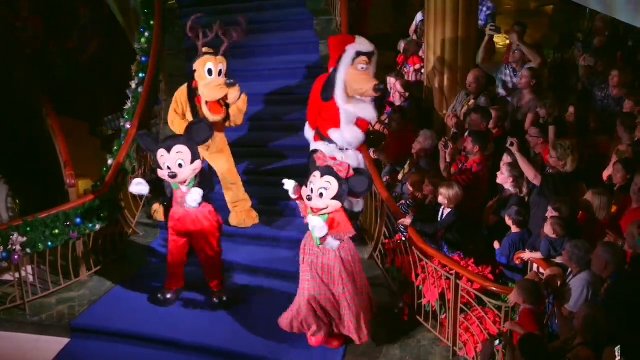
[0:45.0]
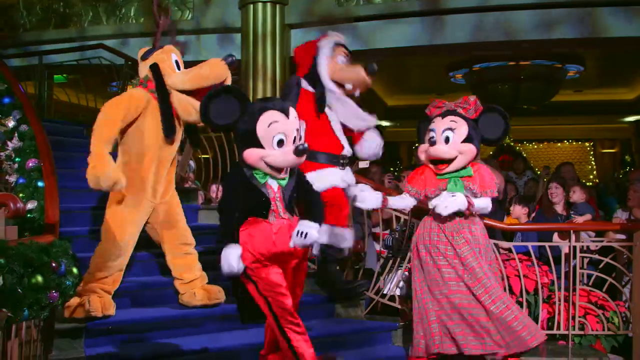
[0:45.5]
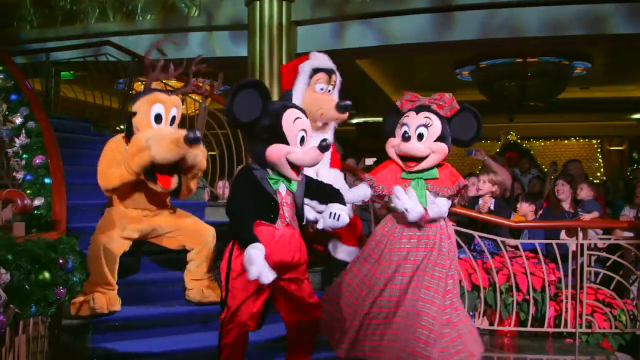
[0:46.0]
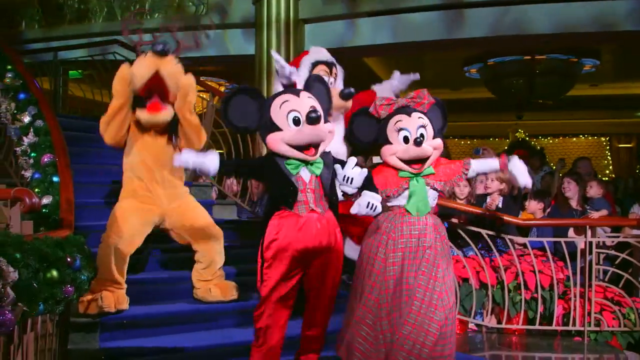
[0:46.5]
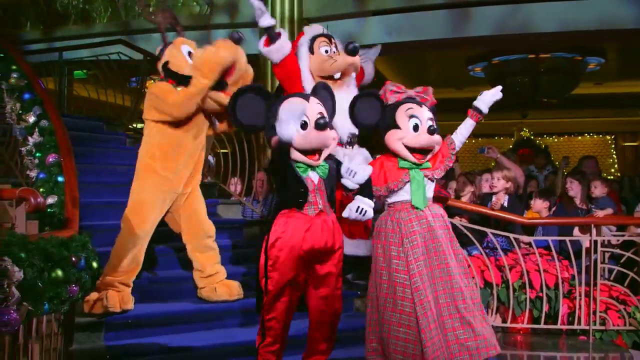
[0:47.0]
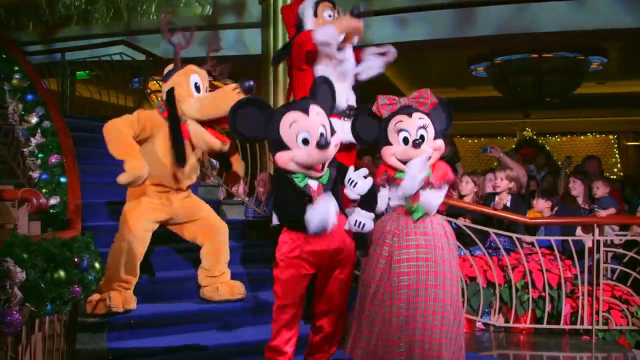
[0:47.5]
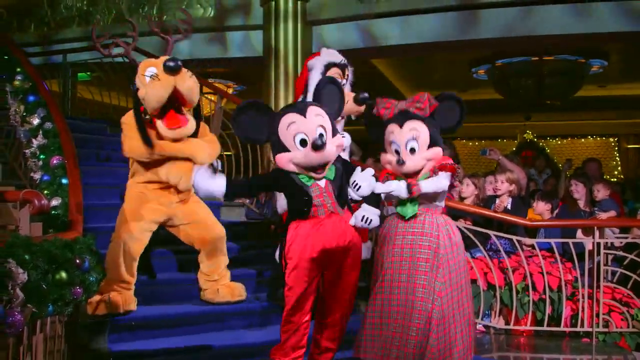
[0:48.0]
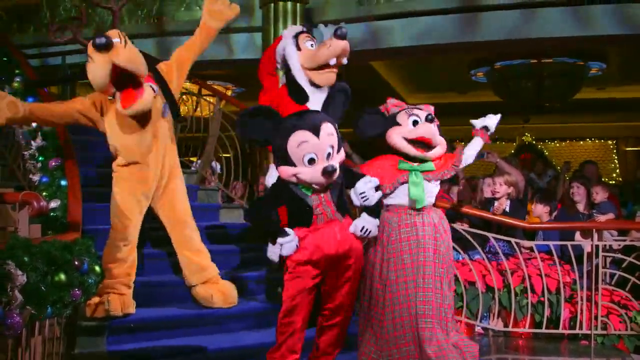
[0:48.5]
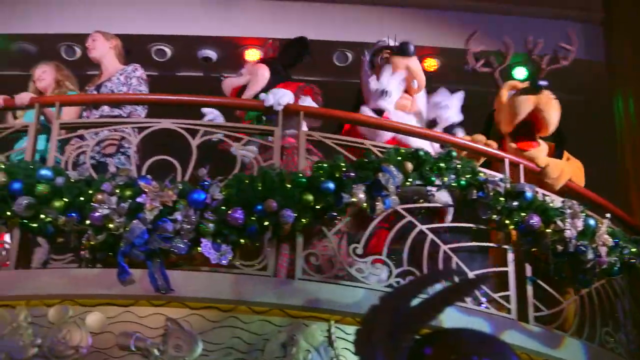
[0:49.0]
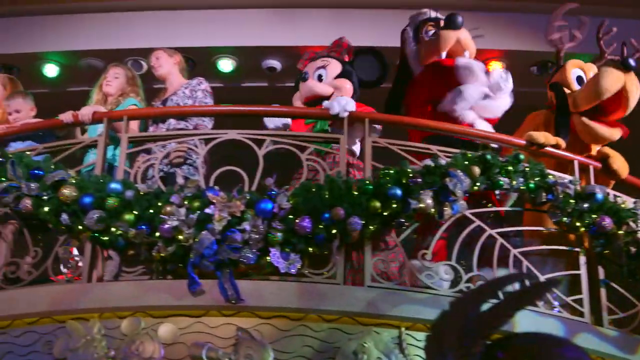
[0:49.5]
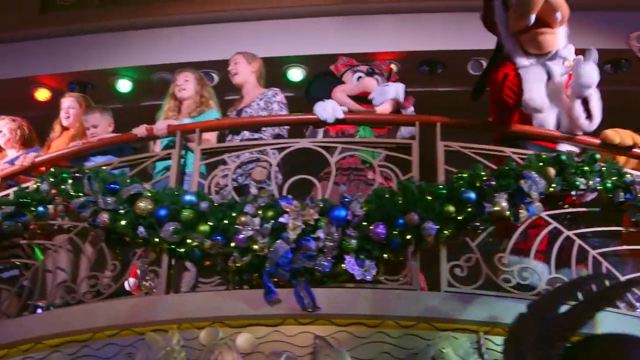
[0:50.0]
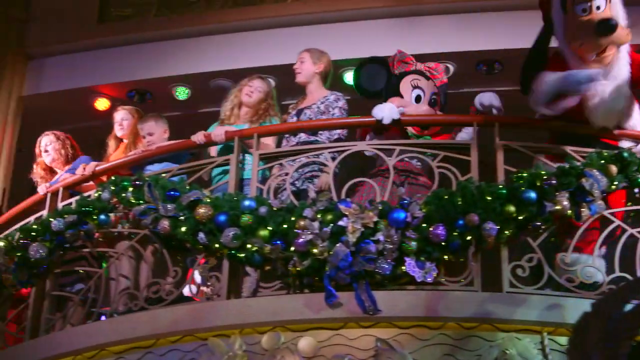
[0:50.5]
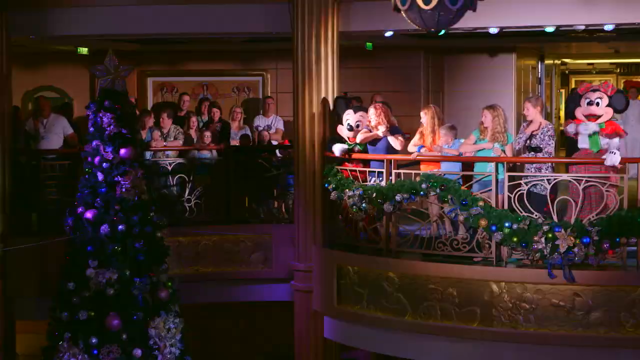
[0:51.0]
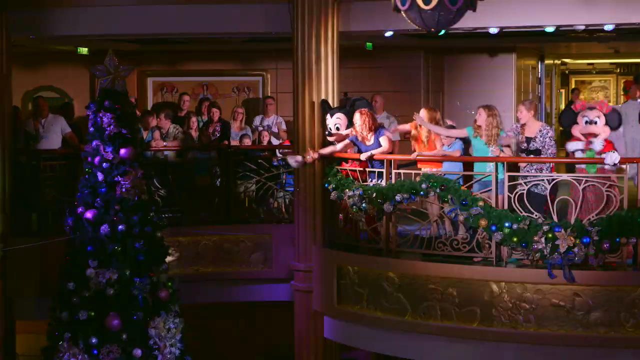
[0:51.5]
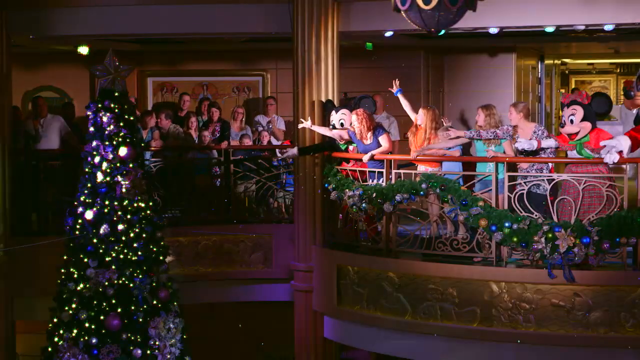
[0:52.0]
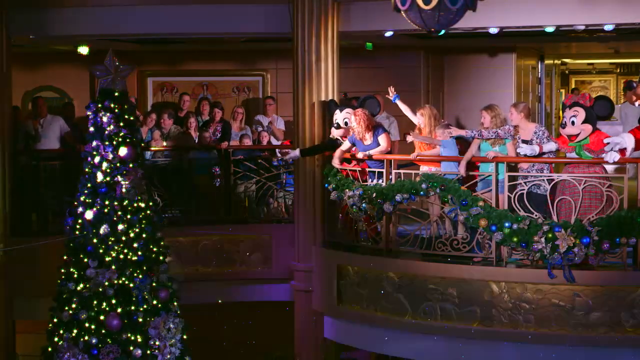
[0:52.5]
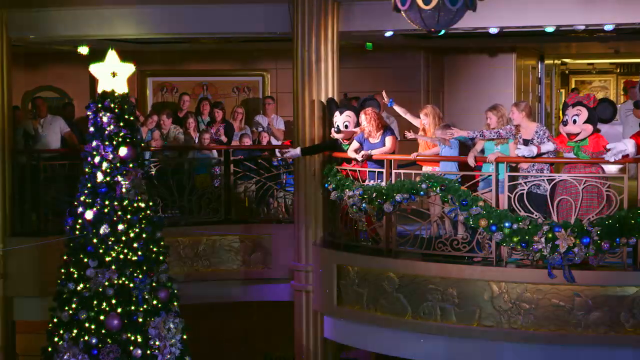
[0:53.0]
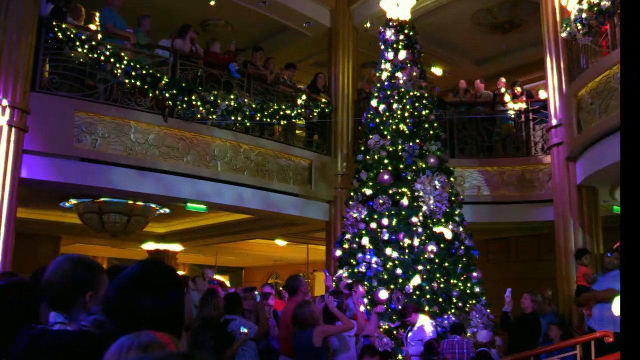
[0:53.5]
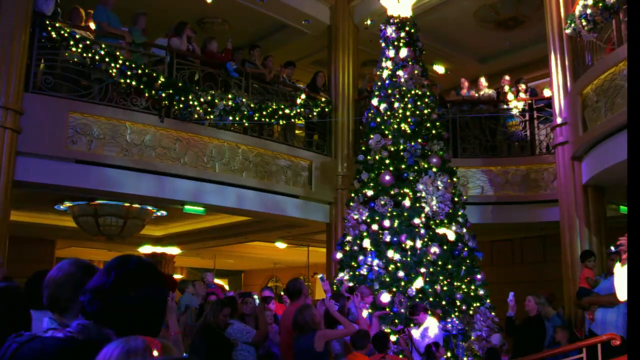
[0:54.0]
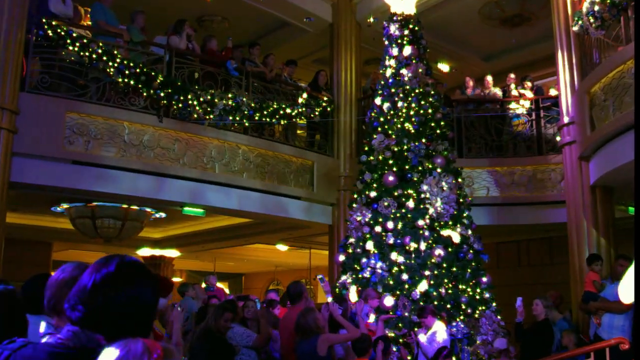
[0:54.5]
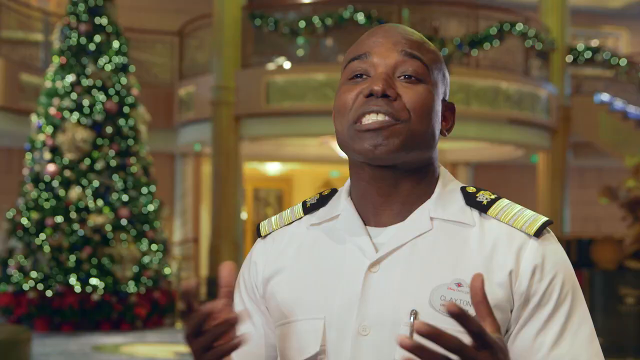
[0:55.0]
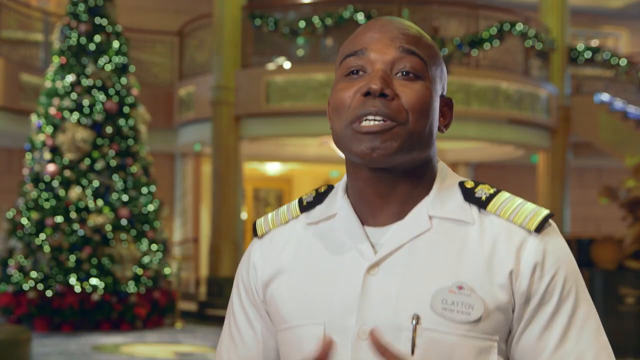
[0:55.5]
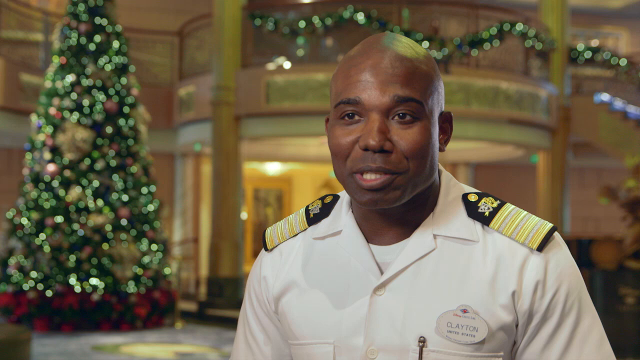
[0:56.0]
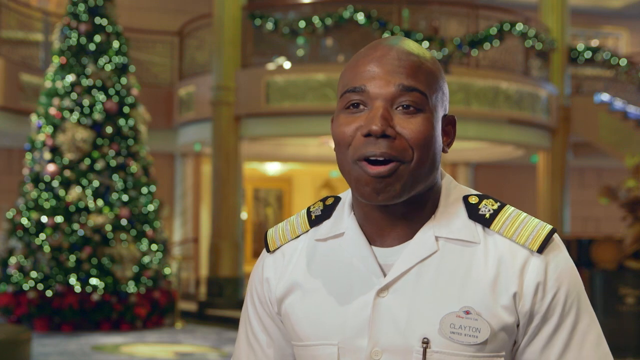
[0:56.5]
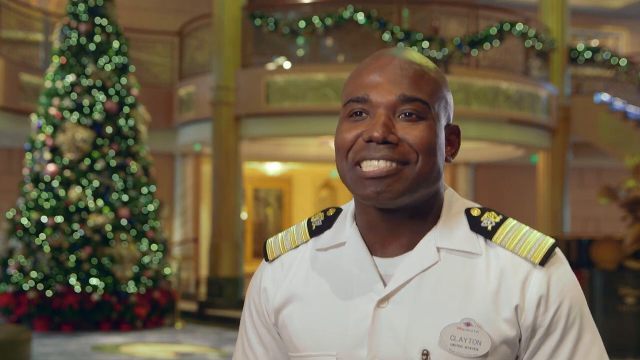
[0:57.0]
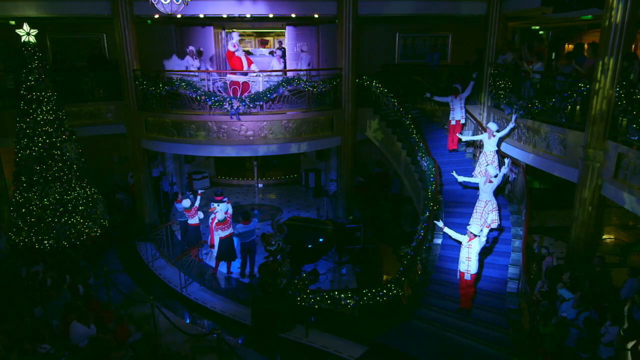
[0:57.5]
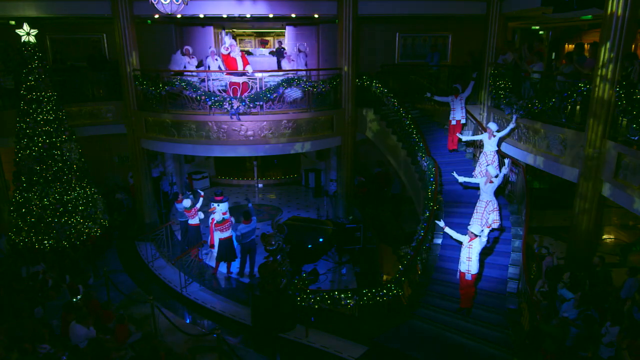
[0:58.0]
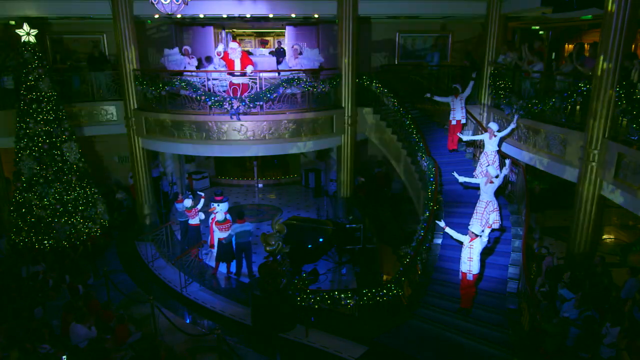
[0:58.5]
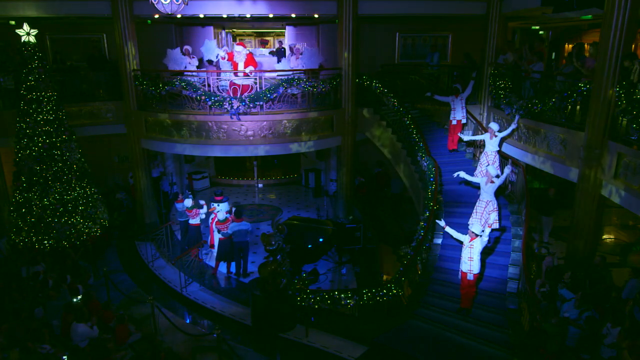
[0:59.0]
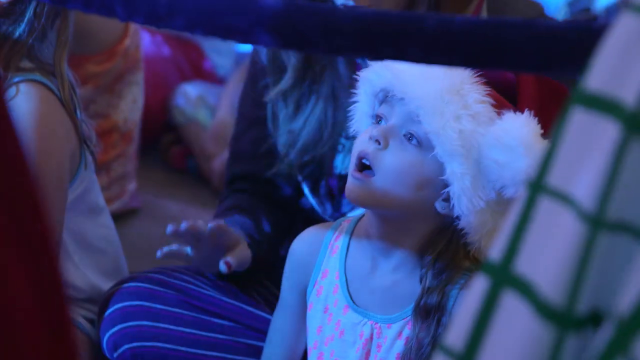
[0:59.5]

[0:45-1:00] Mickey and Minnie Mouse, Pluto and Goofy dance on a large blue staircase as children and adults look on, with lots of garland and poinsettias around. From the ground floor, the view looks up at the mezzanine, where the same characters dance and children stand beside them singing, apparently Christmas carols. People throw glitter off the mezzanine, and the big Christmas tree takes up two floors. Clayton the cruise director appears again, this time without a name label. Dancers come down the staircase dancing while Santa is at the top, and the kids' bright faces look up excitedly. Other dancers are on the ground floor next to a snowman that looks like it could have been made by them. It is dark, with spotlights on Santa on the mezzanine, on the dancers and snowman underneath, and on four dancers on the staircase.